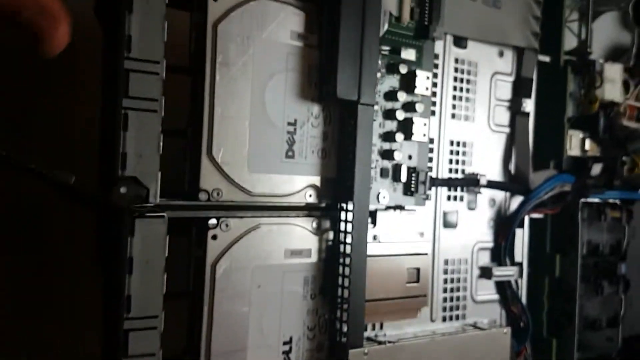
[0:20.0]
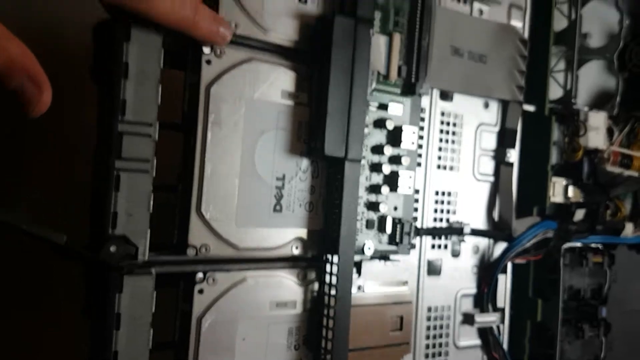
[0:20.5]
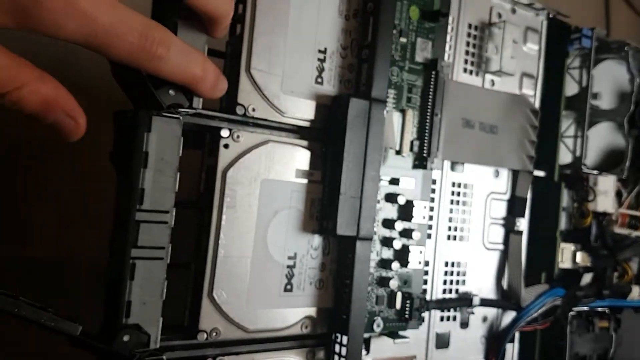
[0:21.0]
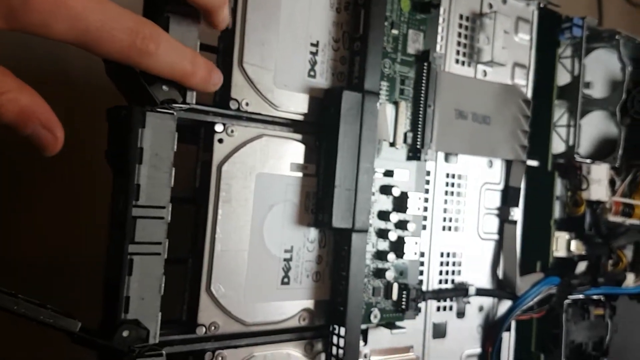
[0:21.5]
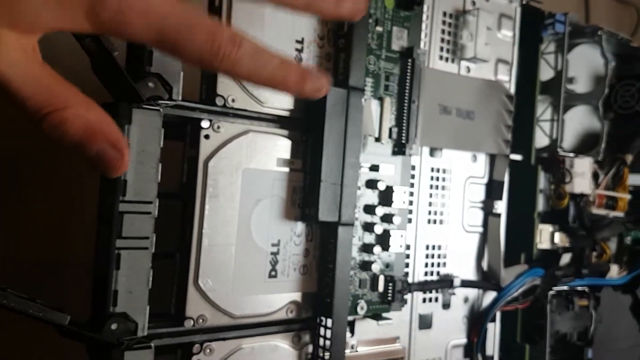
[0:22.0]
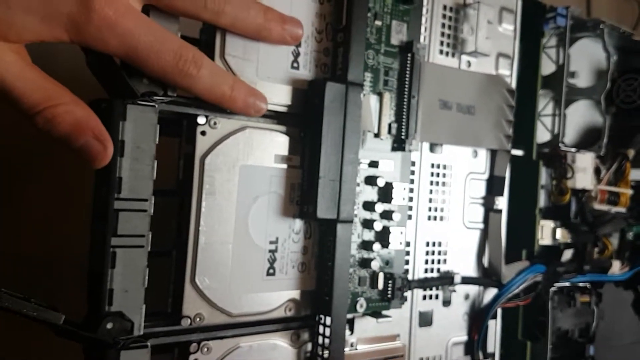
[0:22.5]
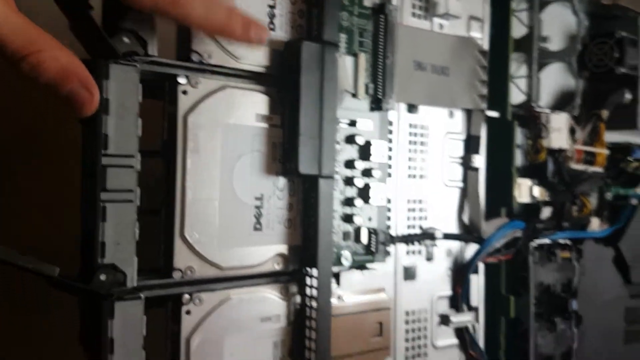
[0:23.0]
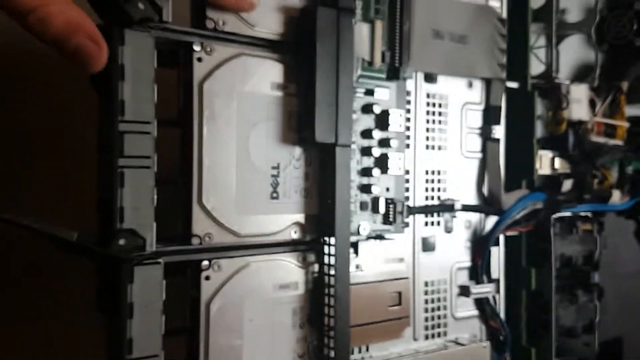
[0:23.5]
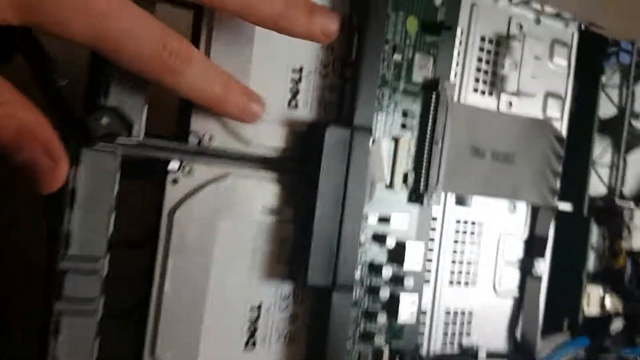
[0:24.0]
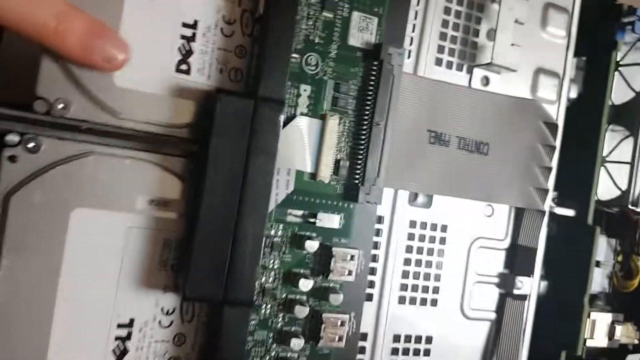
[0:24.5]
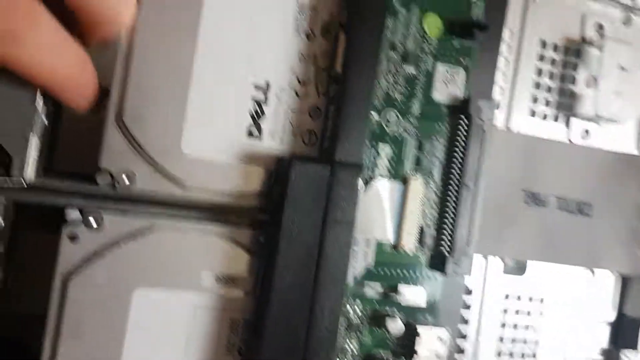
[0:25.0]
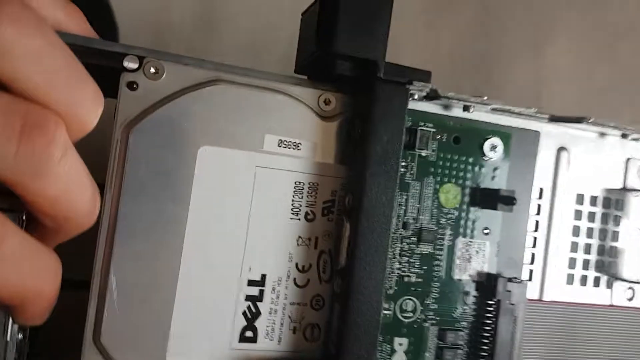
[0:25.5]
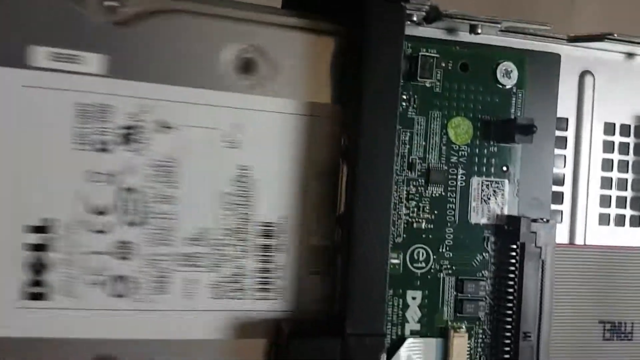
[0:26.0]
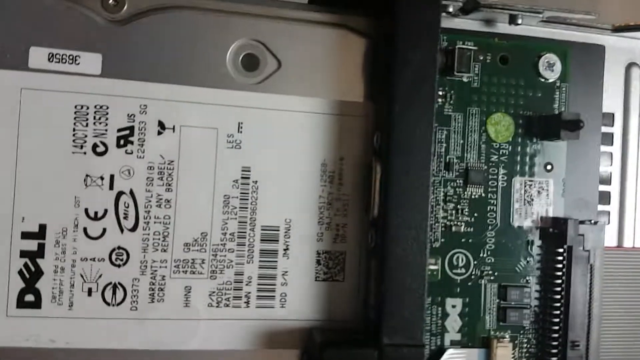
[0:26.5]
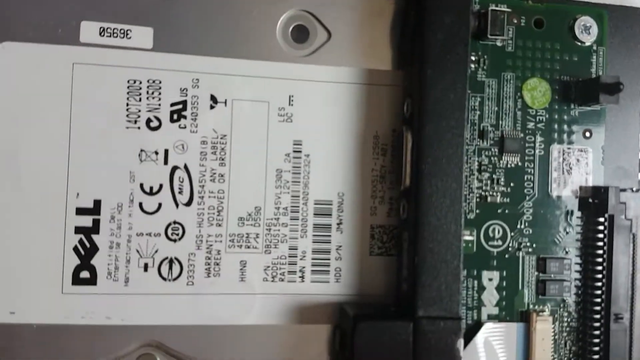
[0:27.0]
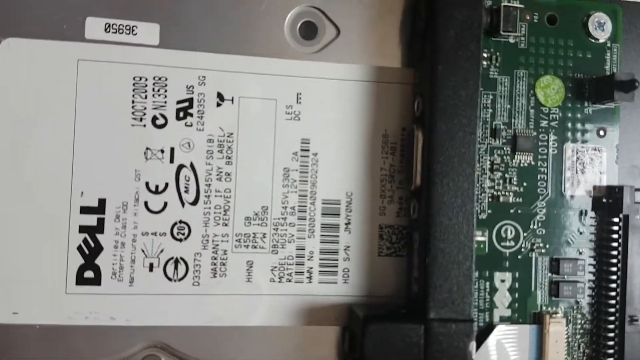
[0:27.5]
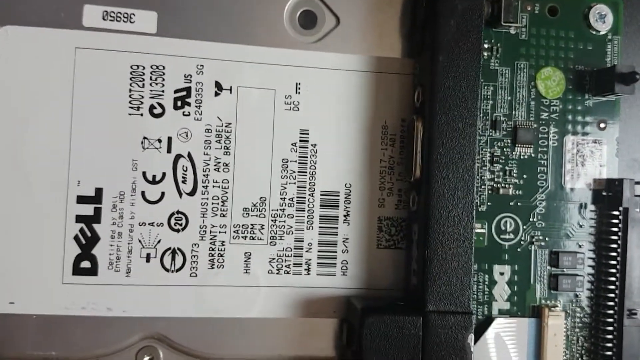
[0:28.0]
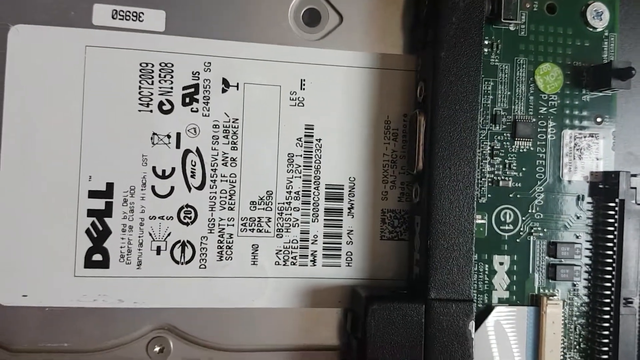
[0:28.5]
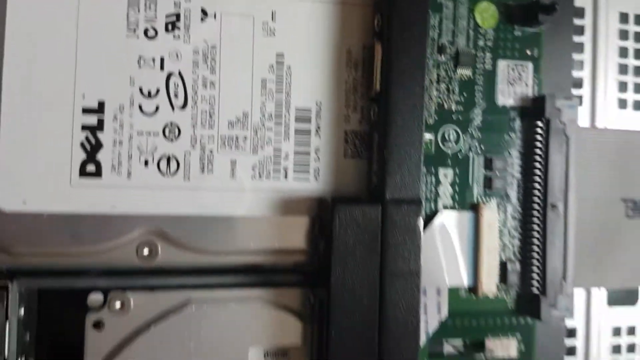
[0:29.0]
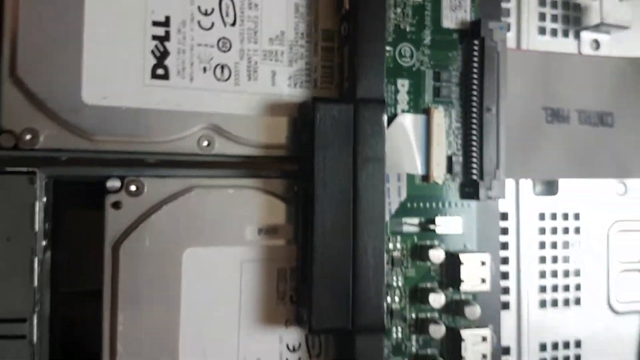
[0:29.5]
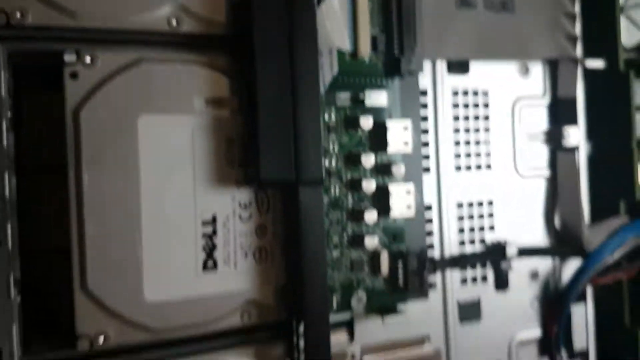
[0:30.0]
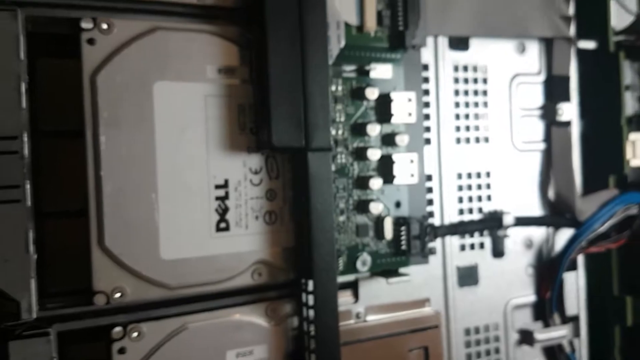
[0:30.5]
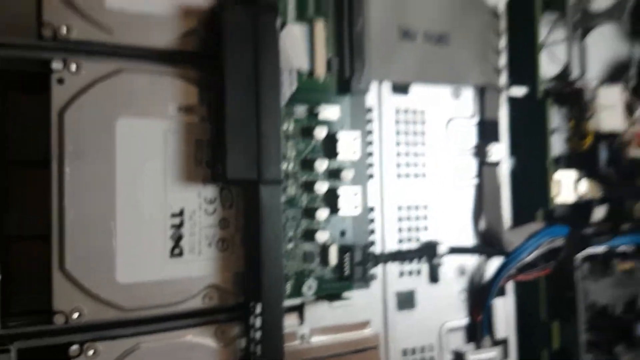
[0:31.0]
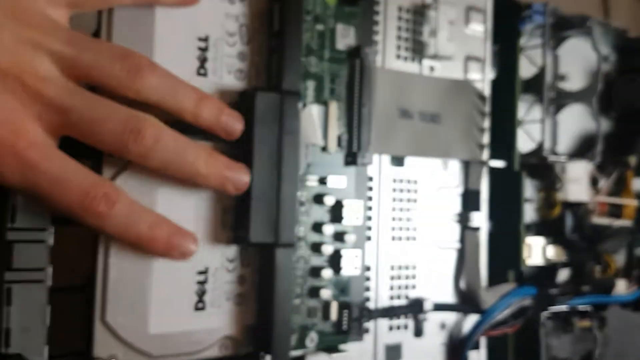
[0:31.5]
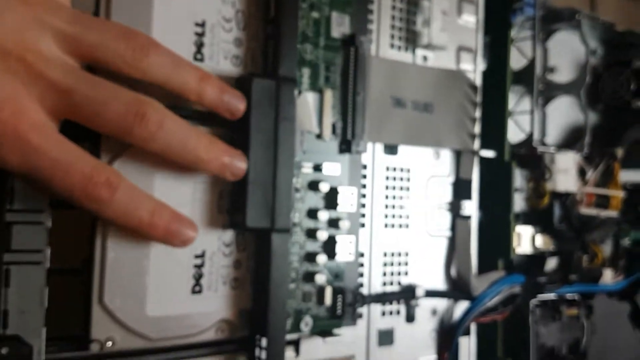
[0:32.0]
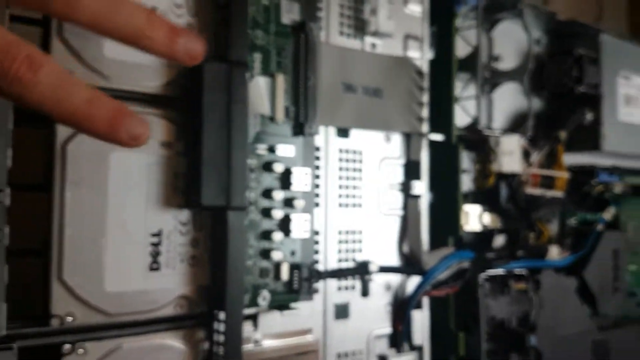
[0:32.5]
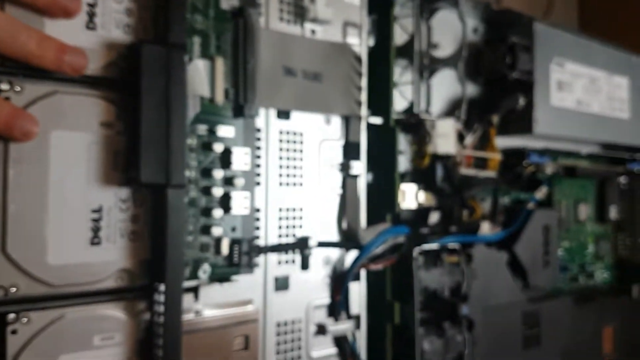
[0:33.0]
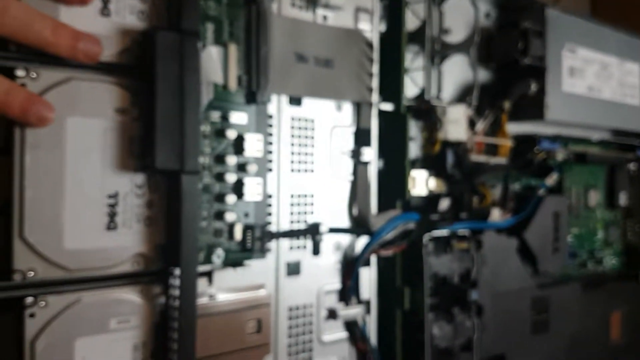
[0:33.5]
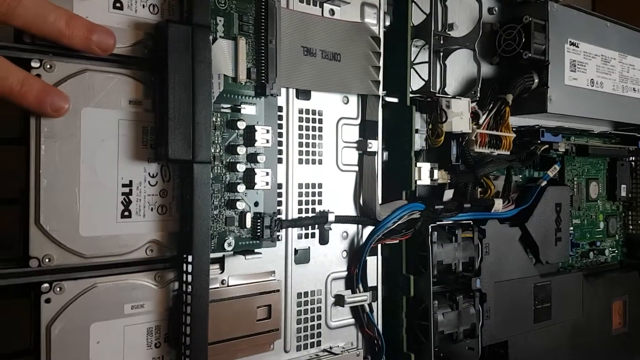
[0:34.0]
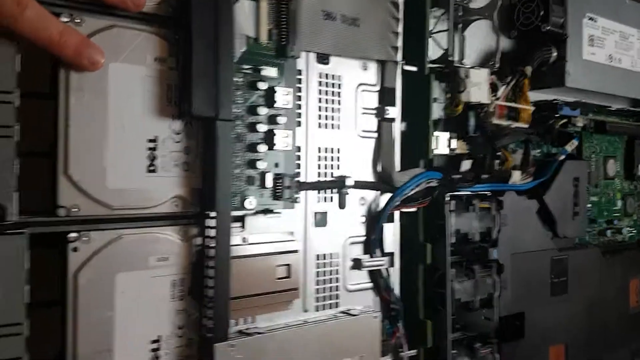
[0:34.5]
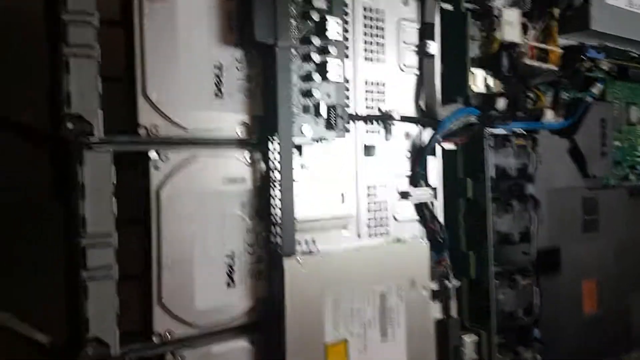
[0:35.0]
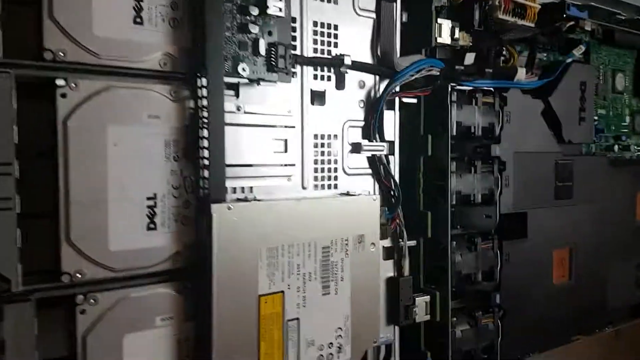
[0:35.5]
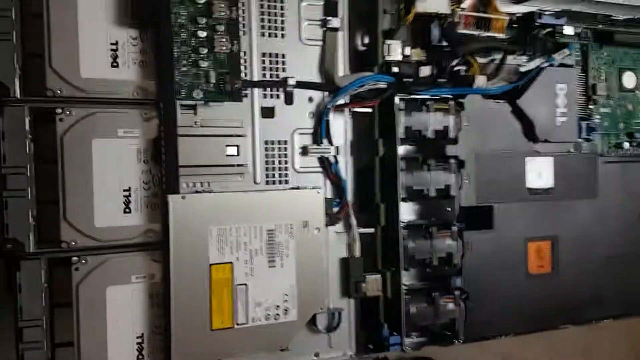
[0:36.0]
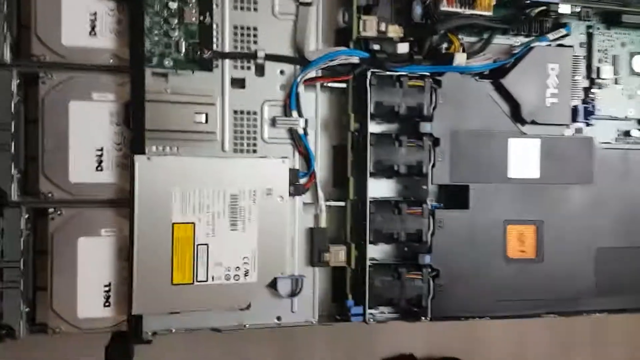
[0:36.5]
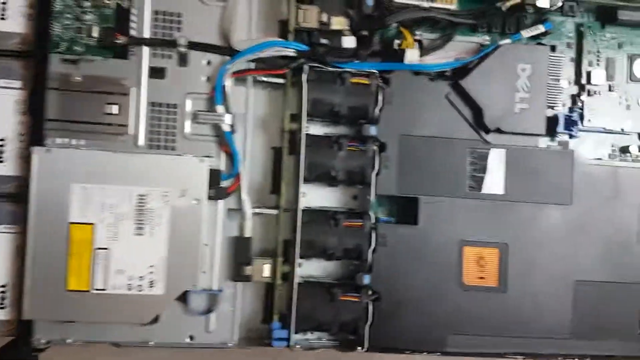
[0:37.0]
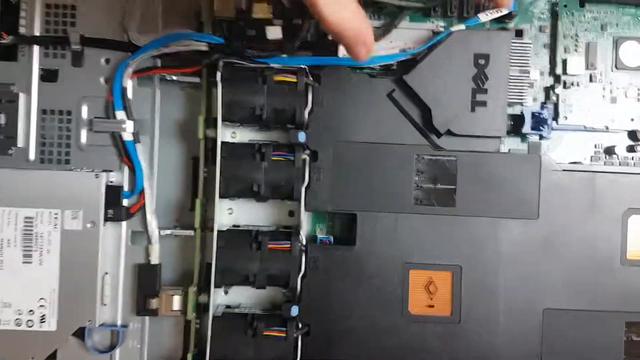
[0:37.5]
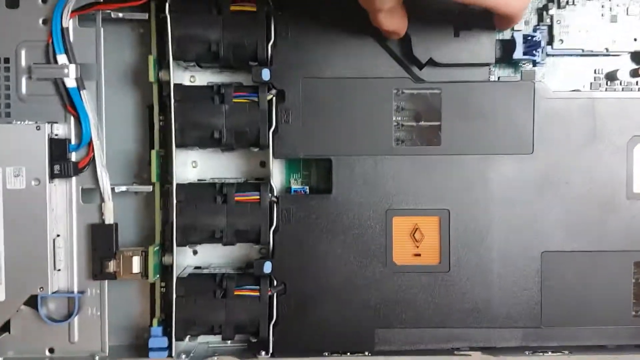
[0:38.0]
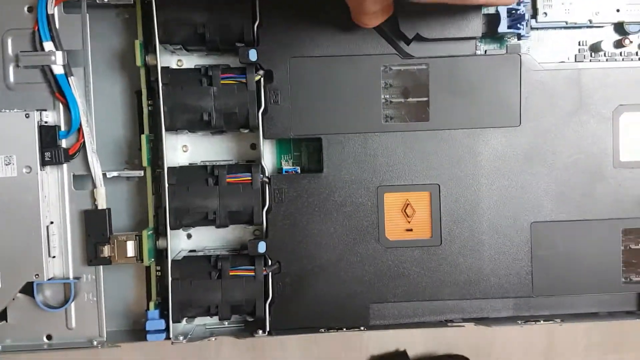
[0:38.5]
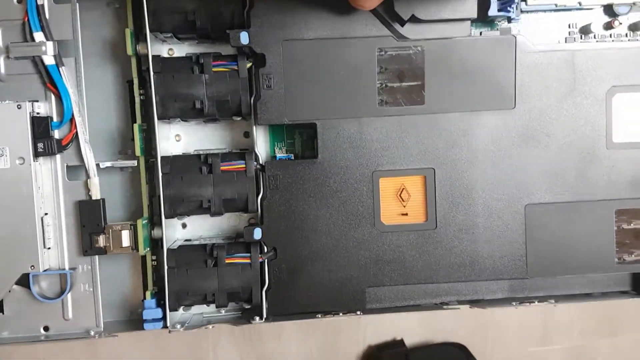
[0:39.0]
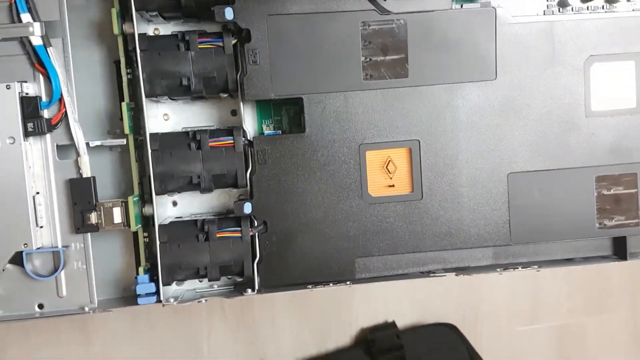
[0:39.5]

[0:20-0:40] A hand touches what appears to be a hard drive and pulls this metal hard drive out of the computer or server. The hand then taps on another hard drive on the left but does not pull it out. On the right-hand side are other components, circuit boards, cables and objects. On the right of the computer or server, the man seems to tamper with a black plastic element, which he tries to remove. The object appears to be missing its shell and has lots of metal and plastic elements, with Dell branding on most of the visible components. Blue cables in the device appear later on. After removing the hard drive, he pushes it back in.